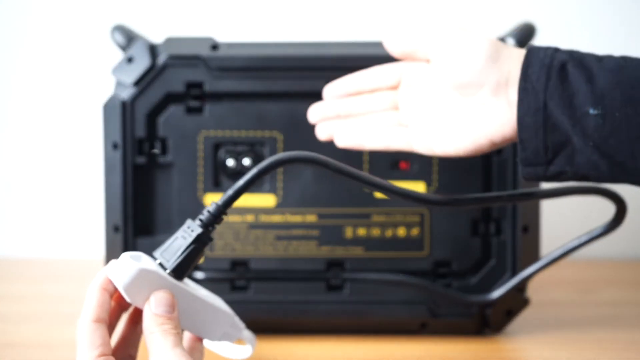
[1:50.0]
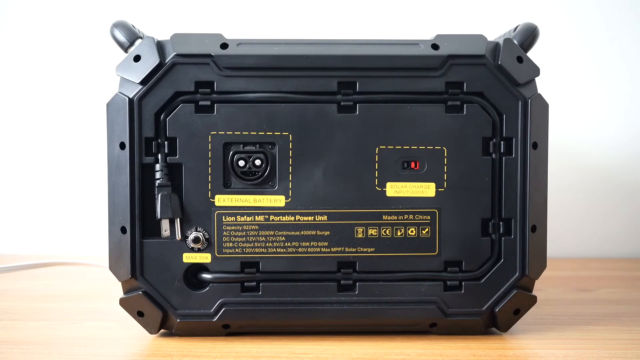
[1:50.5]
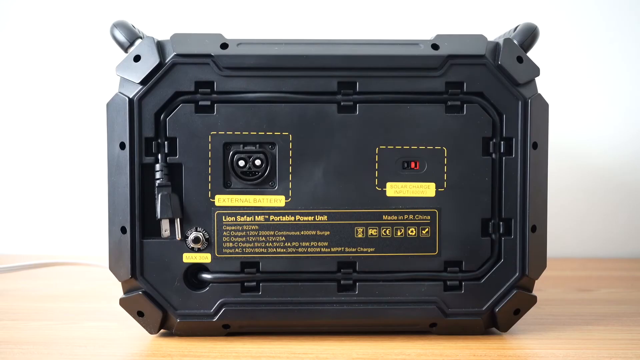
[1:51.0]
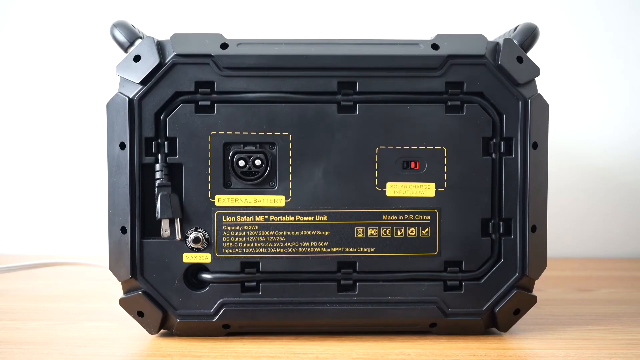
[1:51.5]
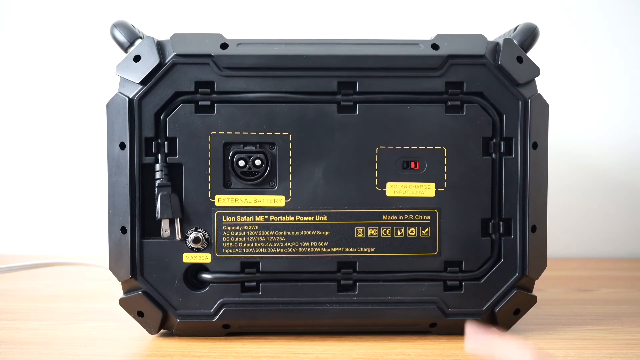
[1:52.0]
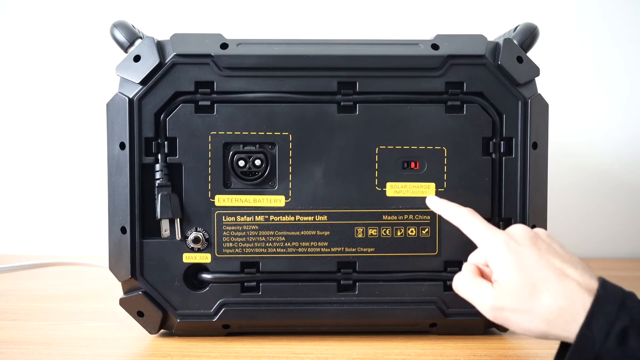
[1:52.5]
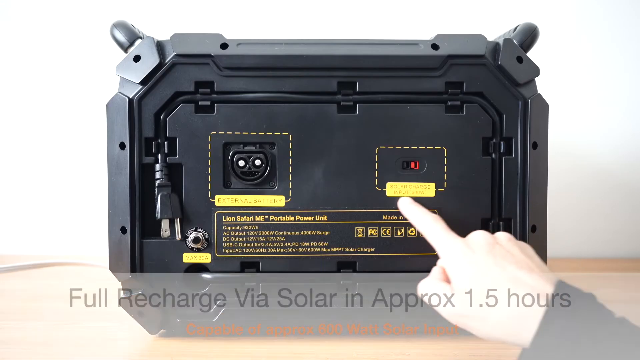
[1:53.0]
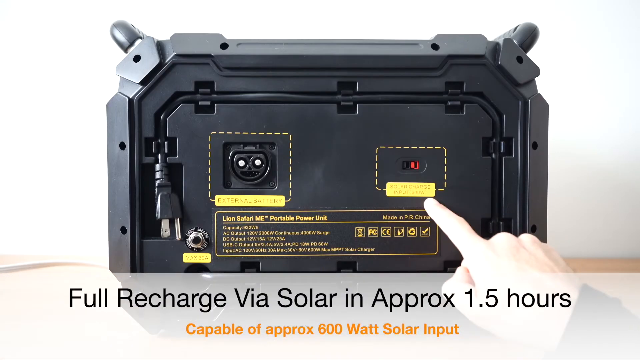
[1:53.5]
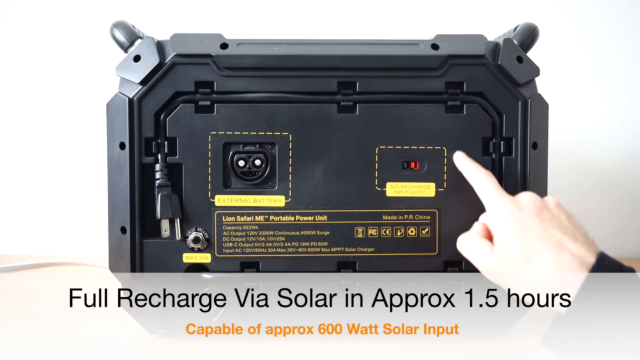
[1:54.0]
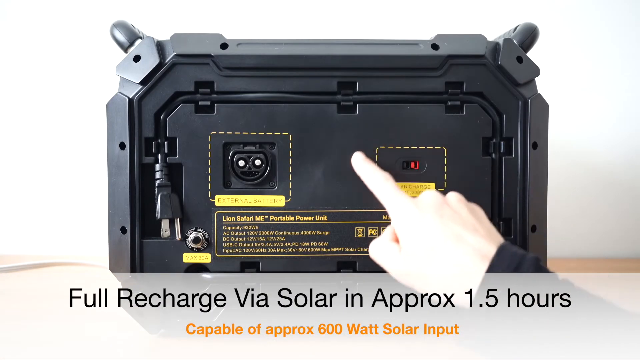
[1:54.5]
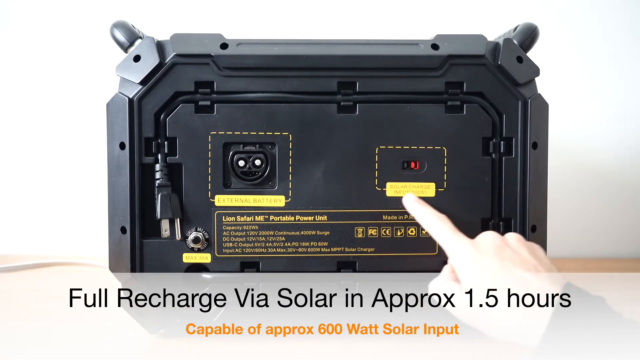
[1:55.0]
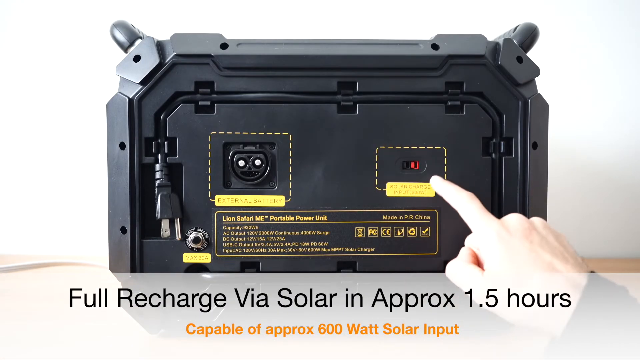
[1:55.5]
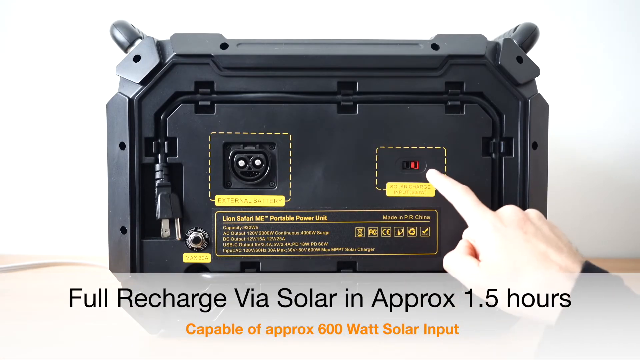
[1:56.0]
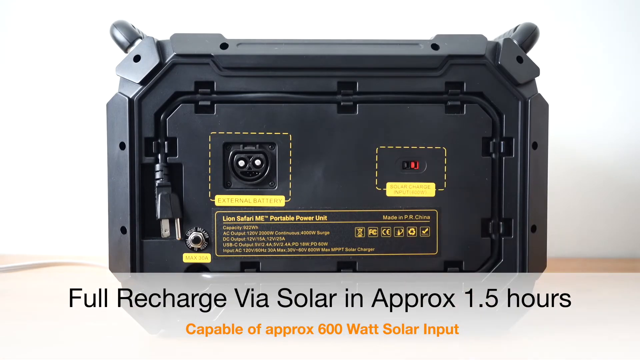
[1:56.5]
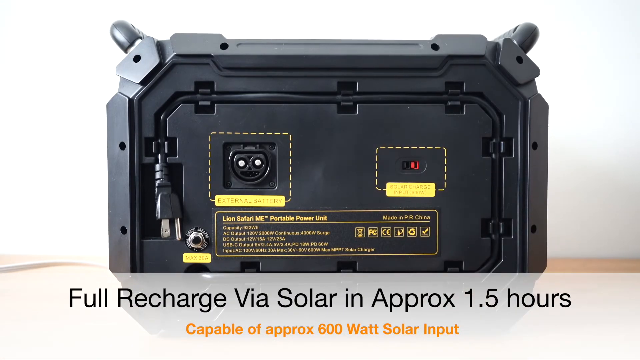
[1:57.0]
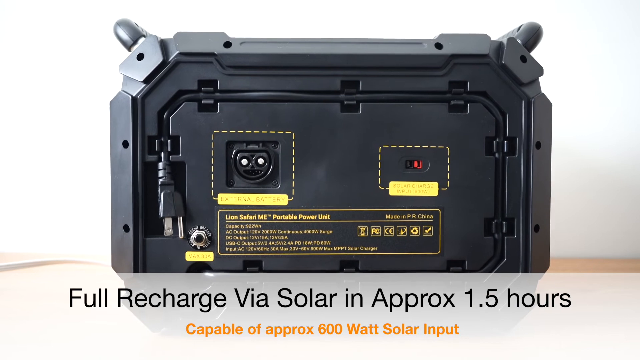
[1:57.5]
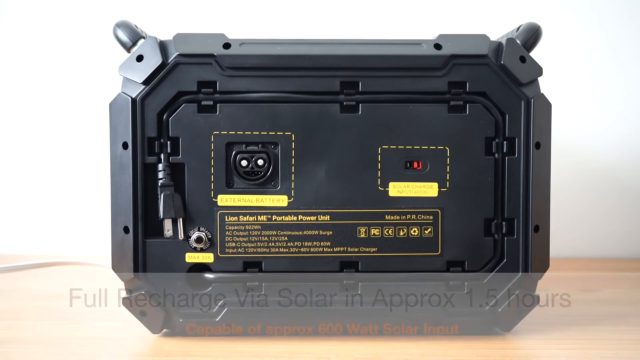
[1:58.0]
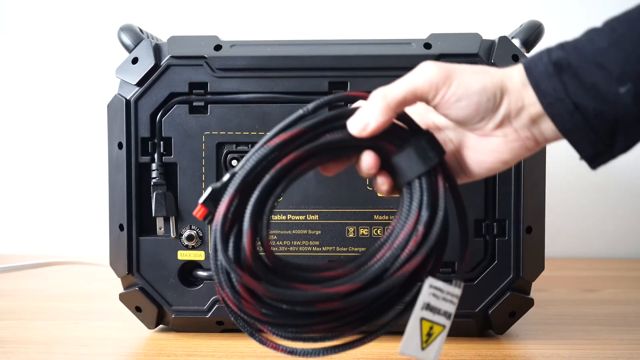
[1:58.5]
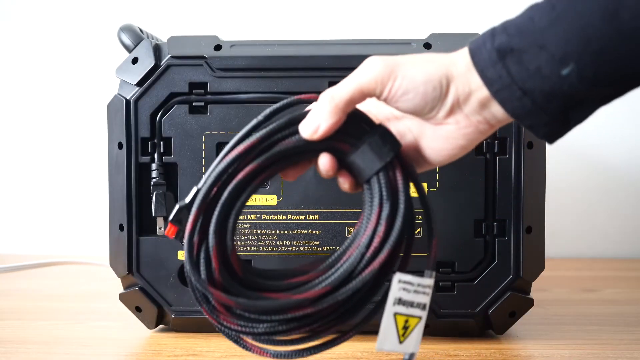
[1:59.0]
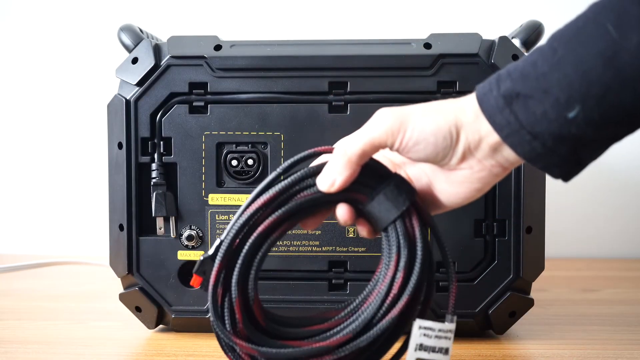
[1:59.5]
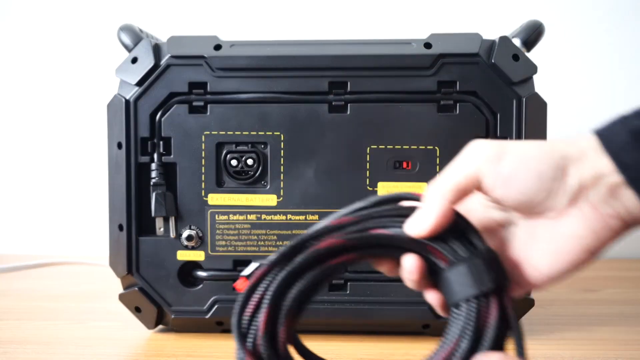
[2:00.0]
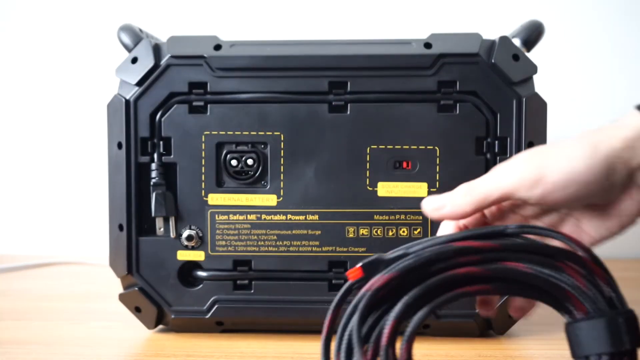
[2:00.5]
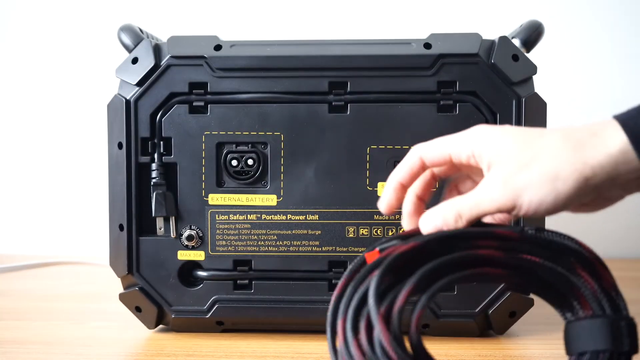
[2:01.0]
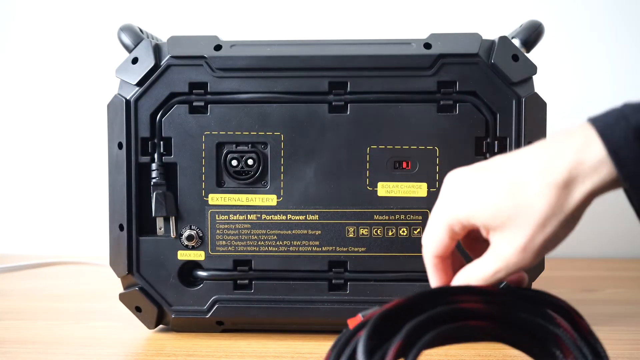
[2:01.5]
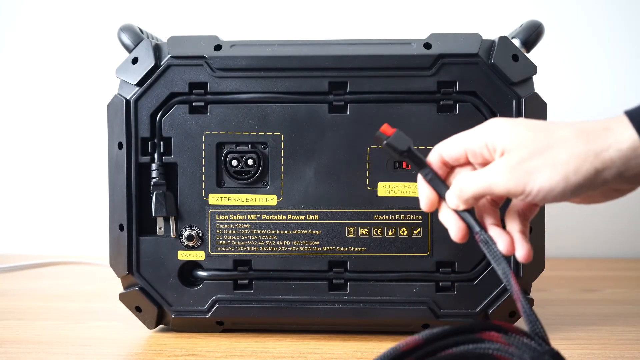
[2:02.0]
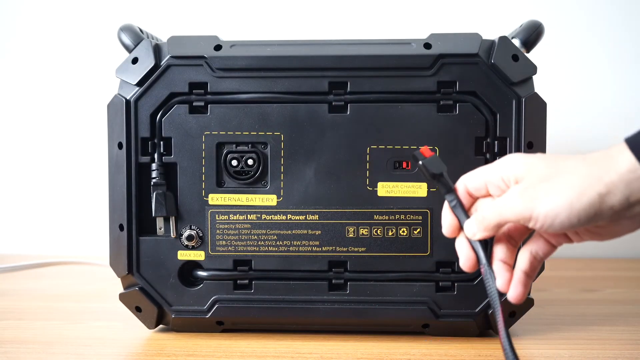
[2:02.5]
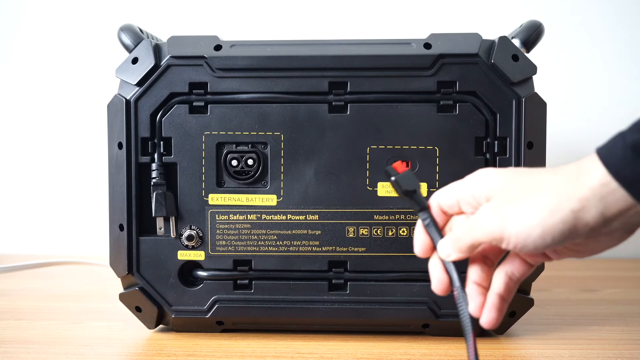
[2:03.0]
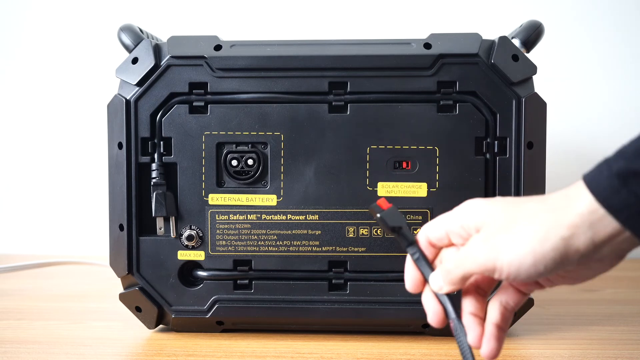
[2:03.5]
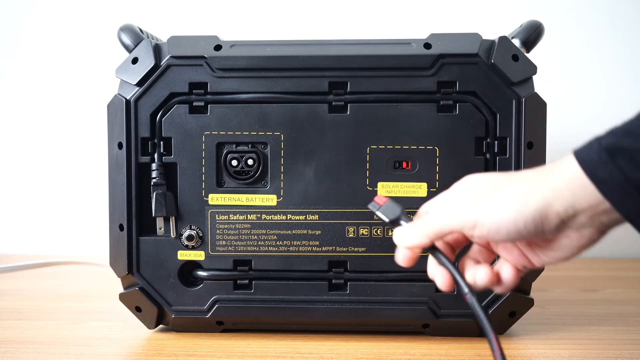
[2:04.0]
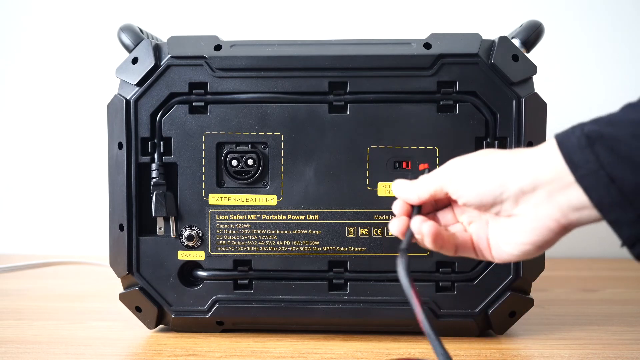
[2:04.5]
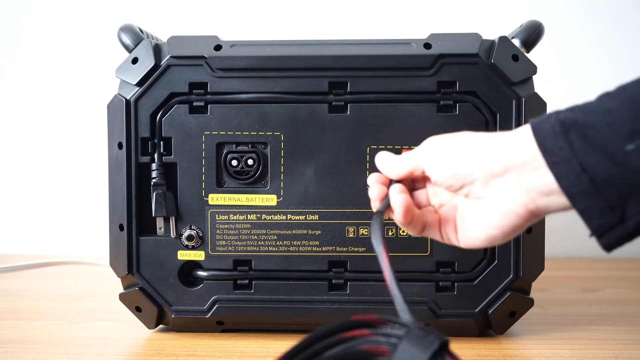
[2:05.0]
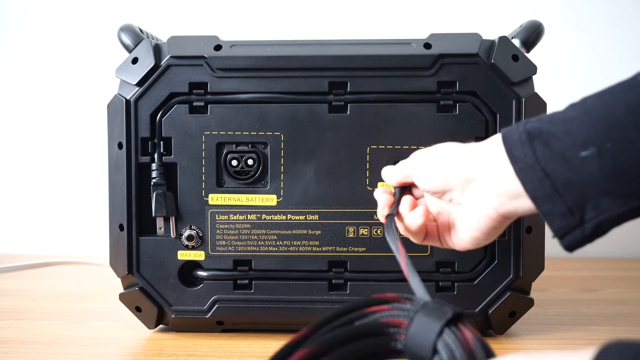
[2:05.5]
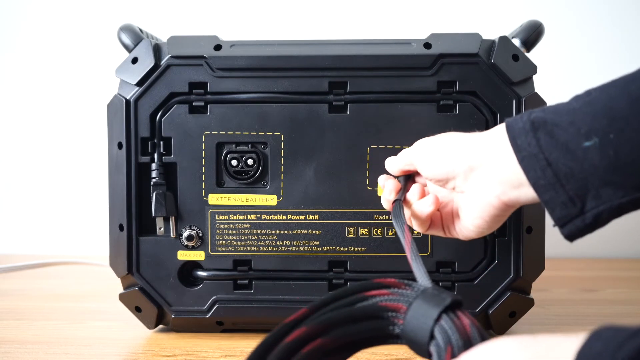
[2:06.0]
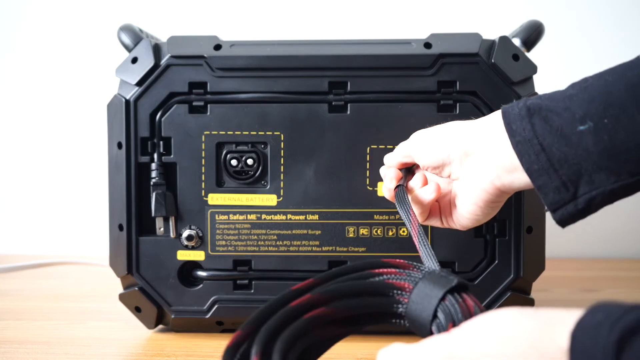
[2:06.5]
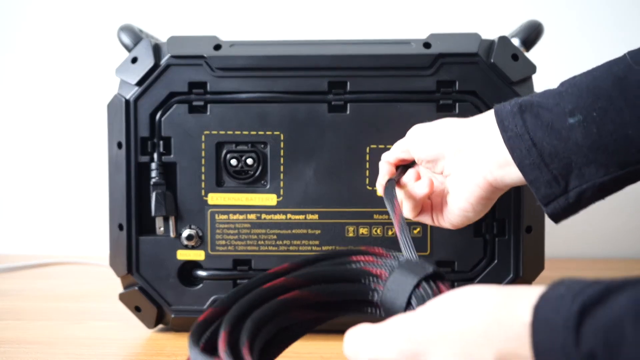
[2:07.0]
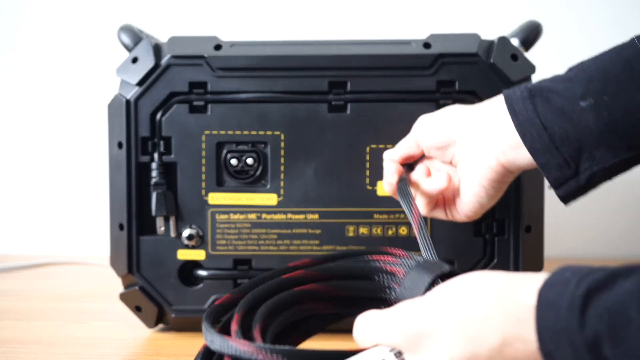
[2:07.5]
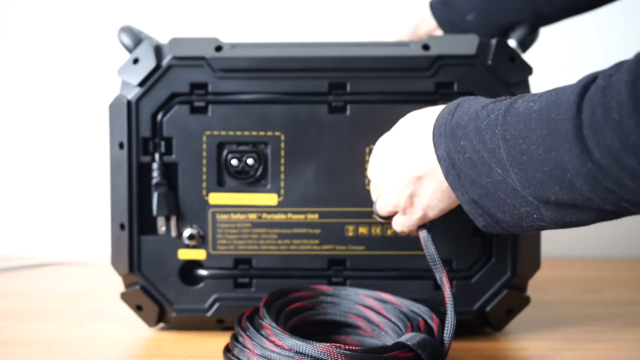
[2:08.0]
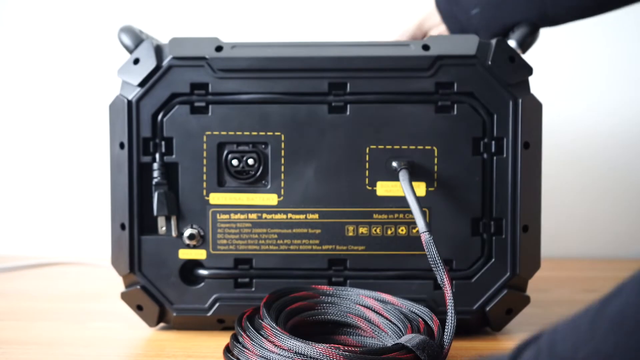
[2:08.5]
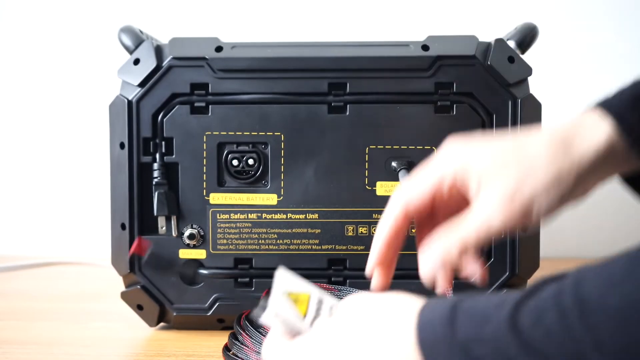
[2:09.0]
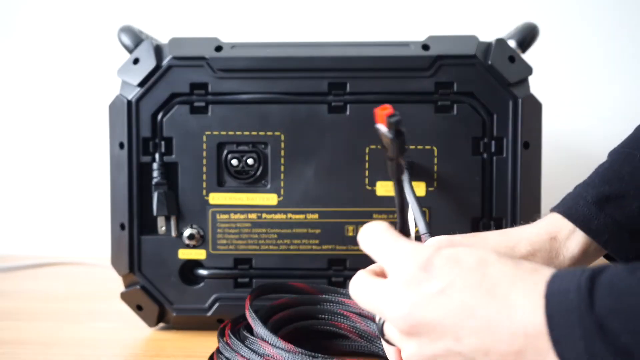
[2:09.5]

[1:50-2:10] A man's hand holds a power source with the cord plugged into it. The machine is then shown with the cable wrapped up at the back of it again. There is an external battery section and information that it is a Lion Safari Mi portable power unit made in China, along with capacity information, AC output, DC output, USB-C, and input AC. He points toward something on the right on the back of it, and text on the screen says "full recharge via solar in approximately 1.5 hours capable of approximately 600 watts solar input." He roughly circles around it with his finger. He then shows another pile of cables in his hand and one of the cable tips, which seems to be red and black, and plugs it into the back of the machine. He has another cable with that red and black color as well.